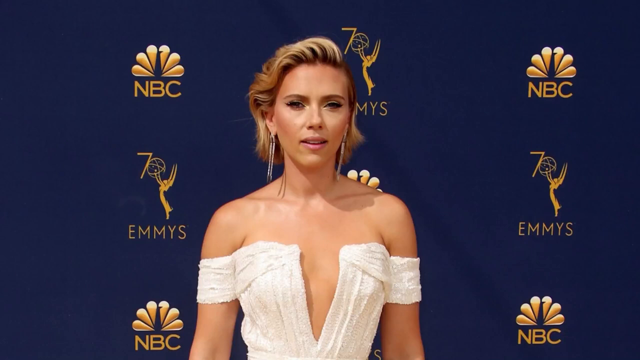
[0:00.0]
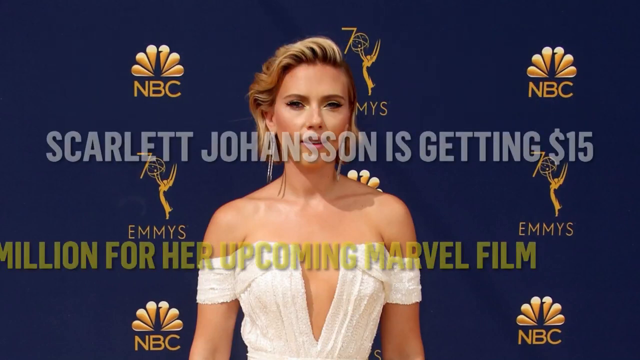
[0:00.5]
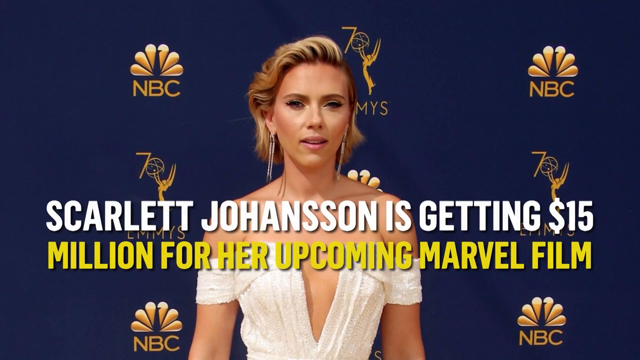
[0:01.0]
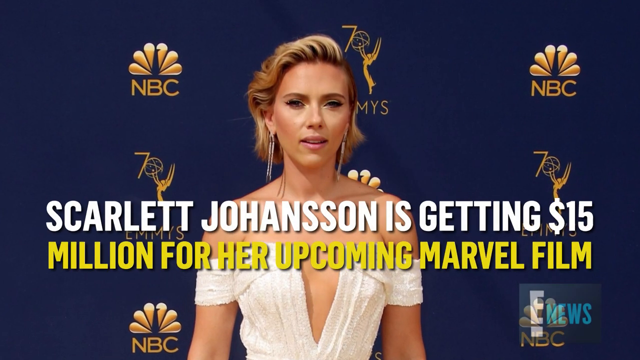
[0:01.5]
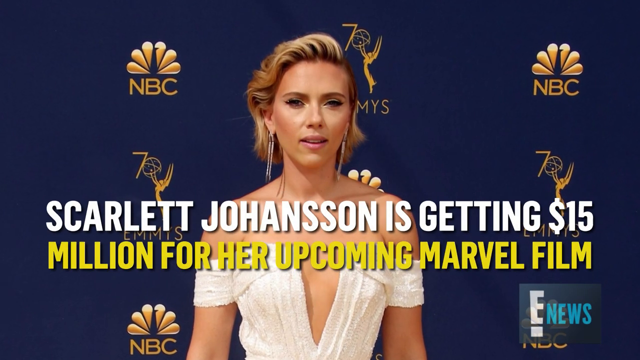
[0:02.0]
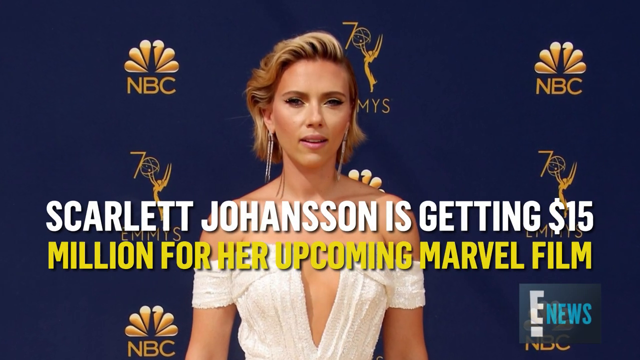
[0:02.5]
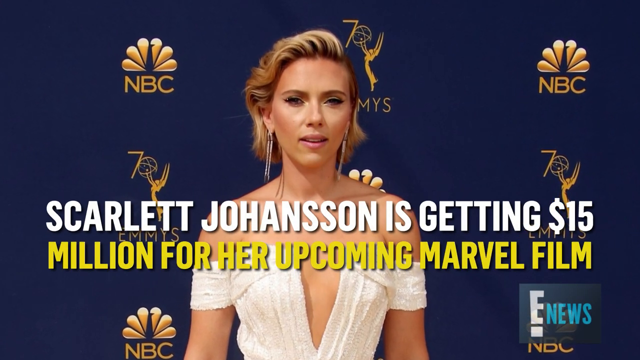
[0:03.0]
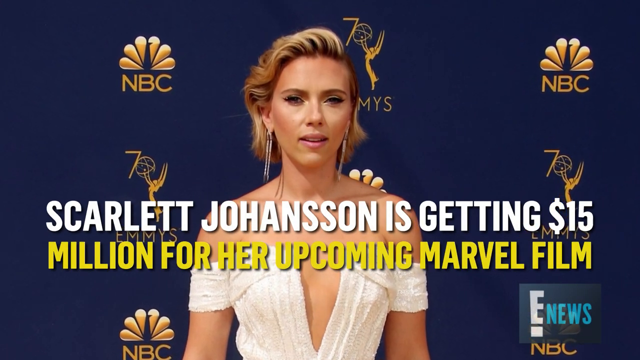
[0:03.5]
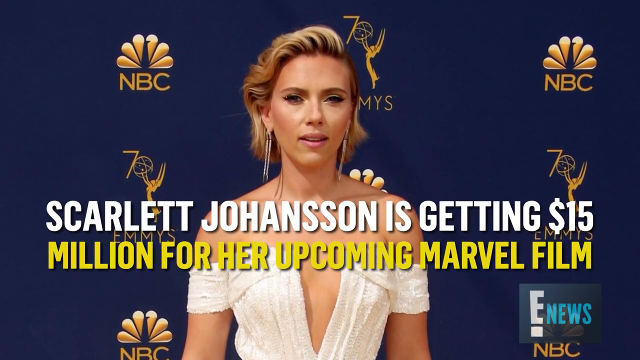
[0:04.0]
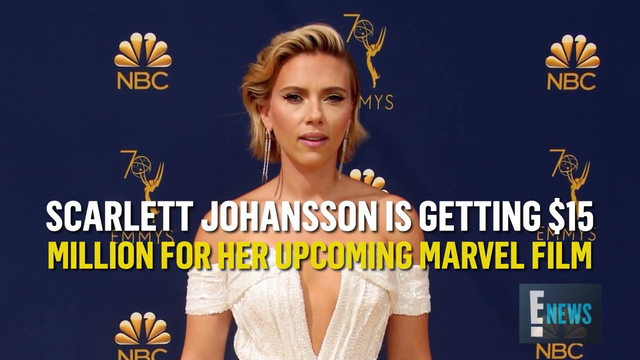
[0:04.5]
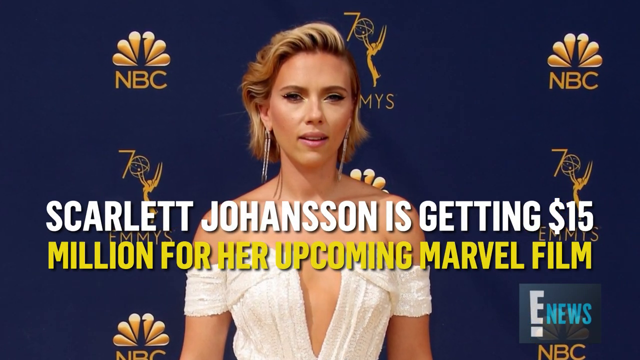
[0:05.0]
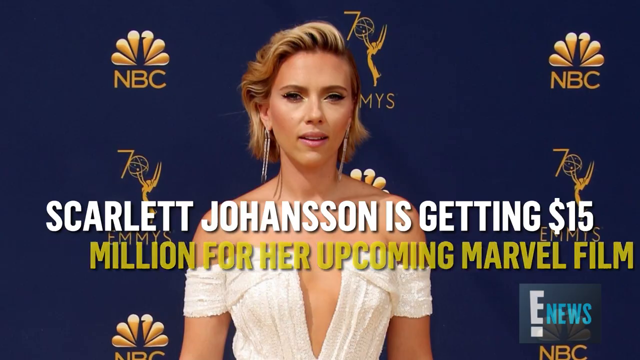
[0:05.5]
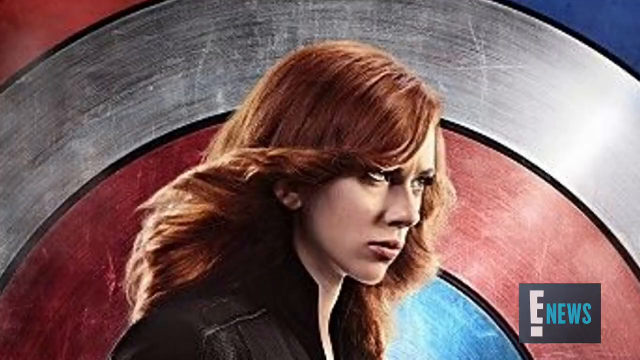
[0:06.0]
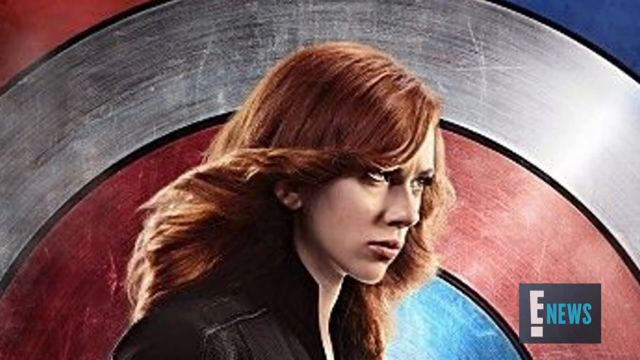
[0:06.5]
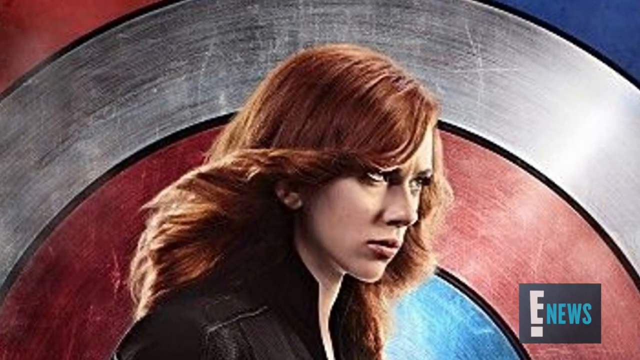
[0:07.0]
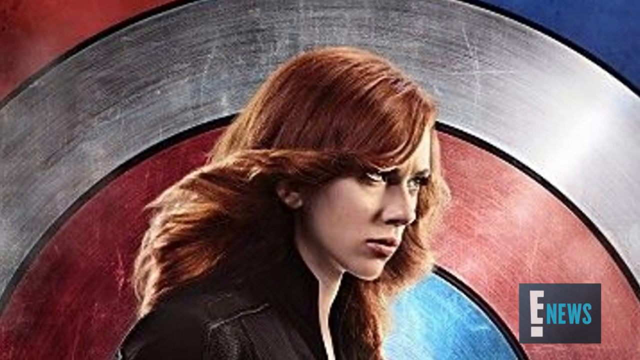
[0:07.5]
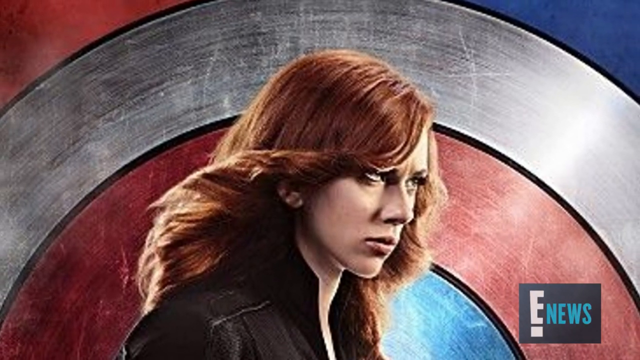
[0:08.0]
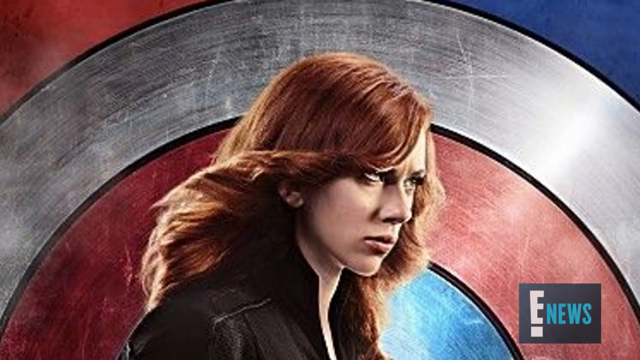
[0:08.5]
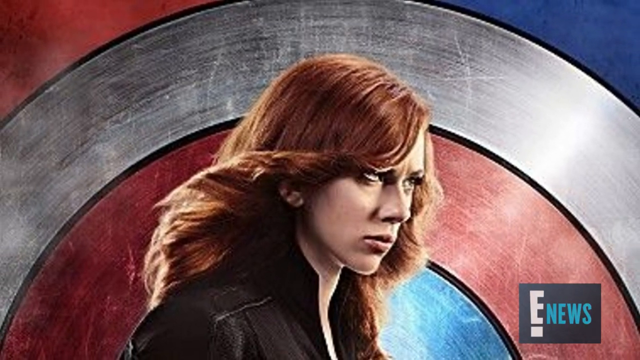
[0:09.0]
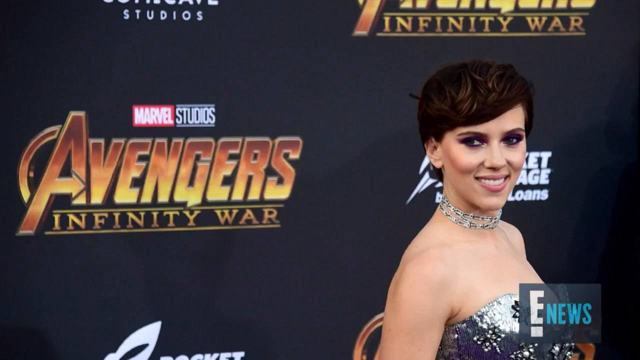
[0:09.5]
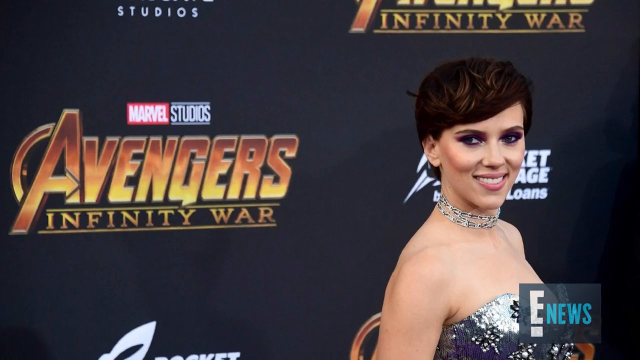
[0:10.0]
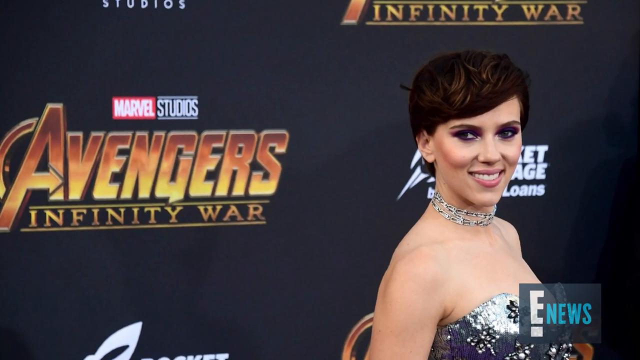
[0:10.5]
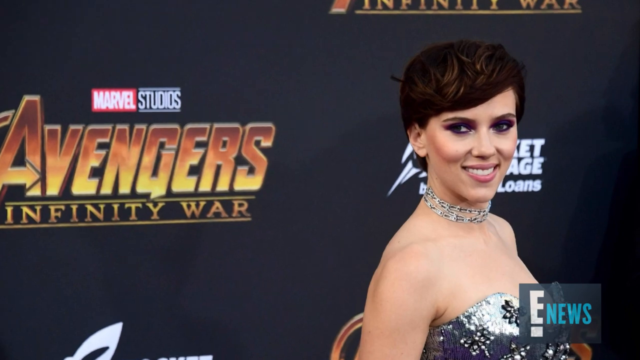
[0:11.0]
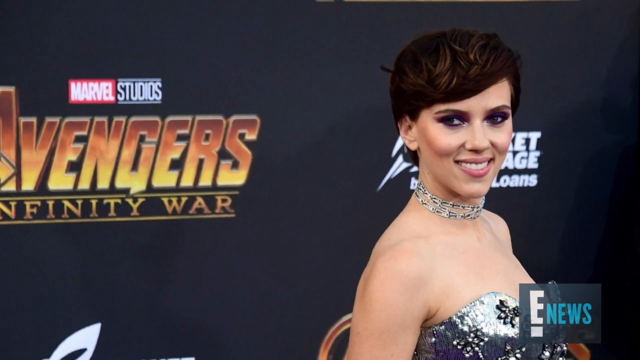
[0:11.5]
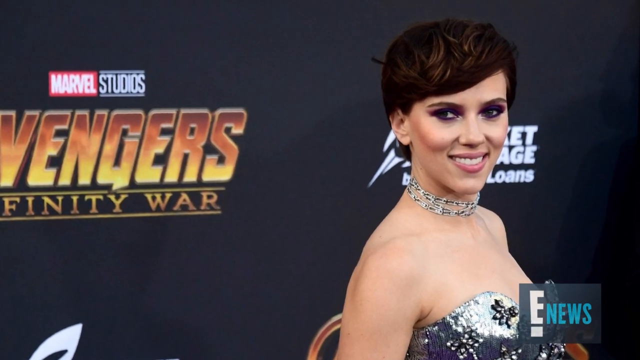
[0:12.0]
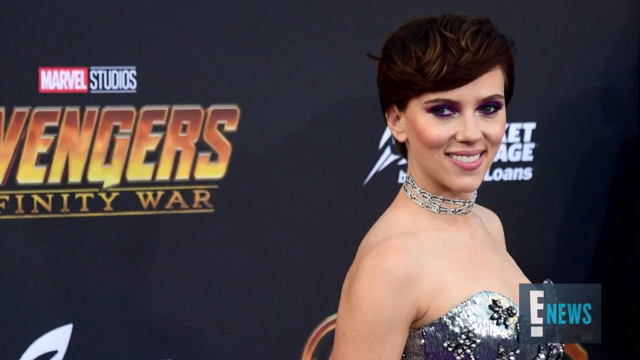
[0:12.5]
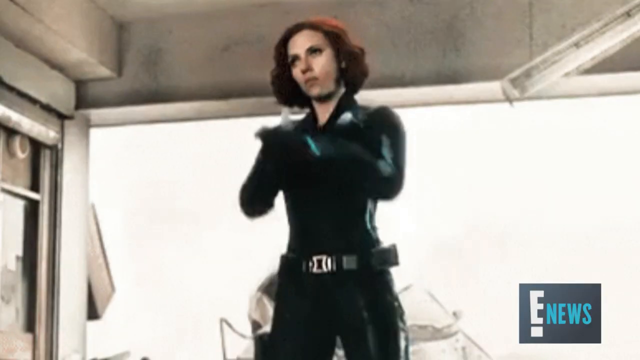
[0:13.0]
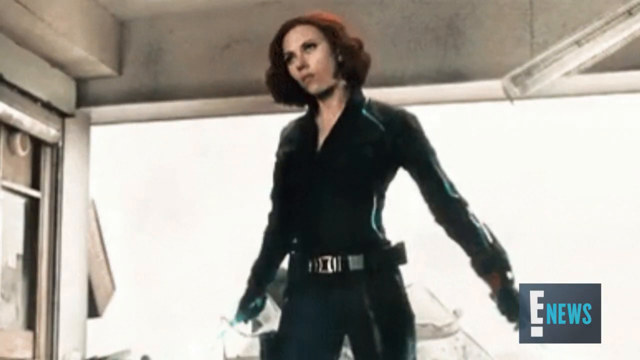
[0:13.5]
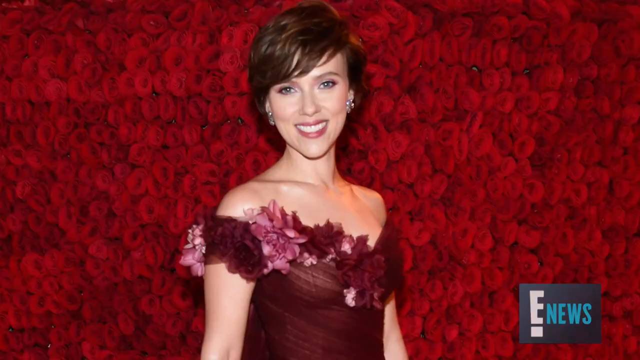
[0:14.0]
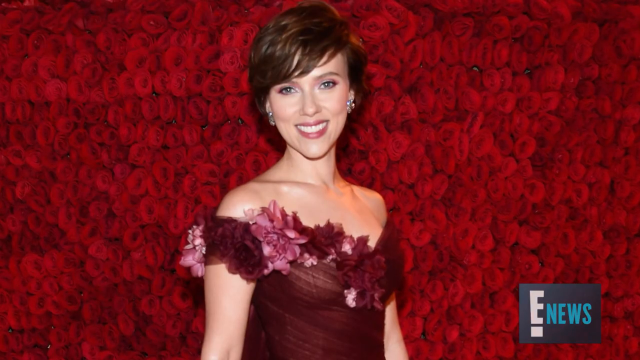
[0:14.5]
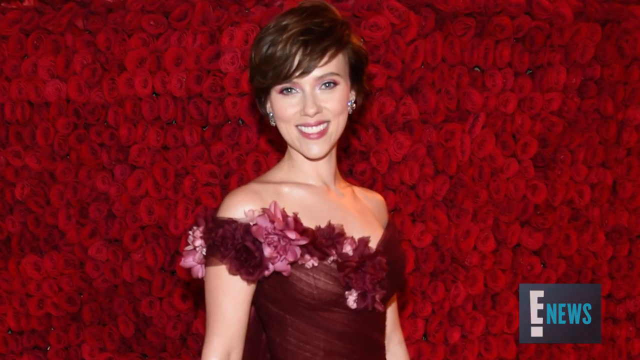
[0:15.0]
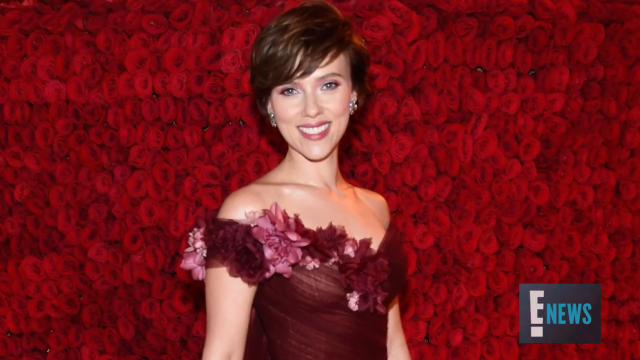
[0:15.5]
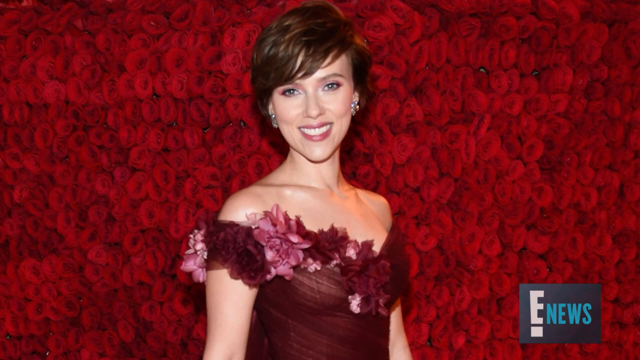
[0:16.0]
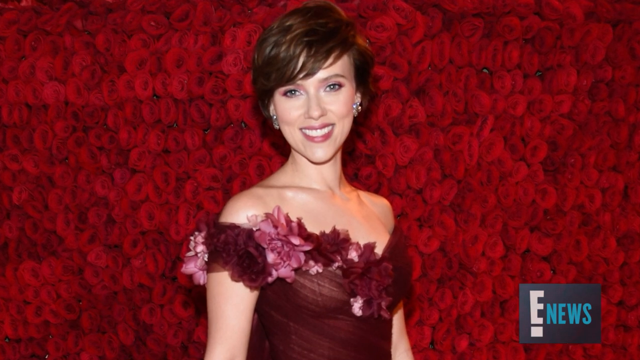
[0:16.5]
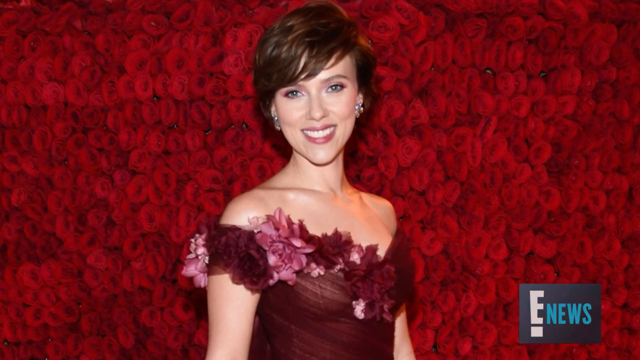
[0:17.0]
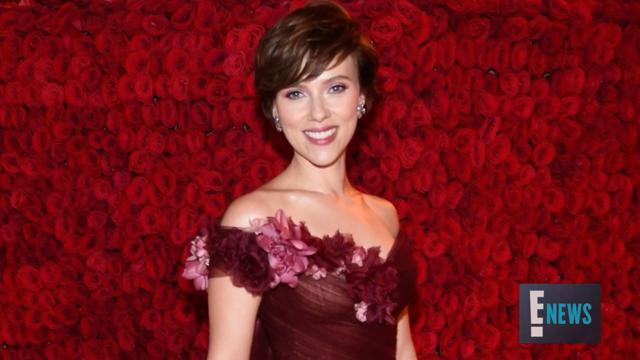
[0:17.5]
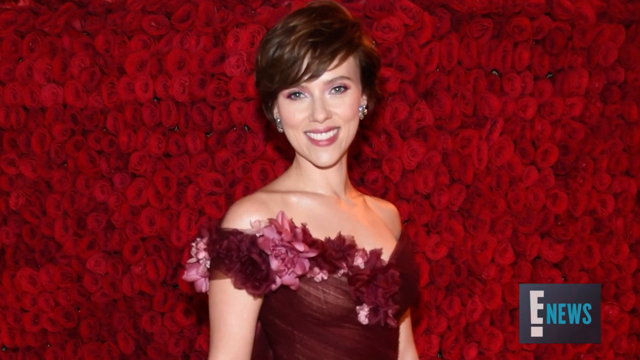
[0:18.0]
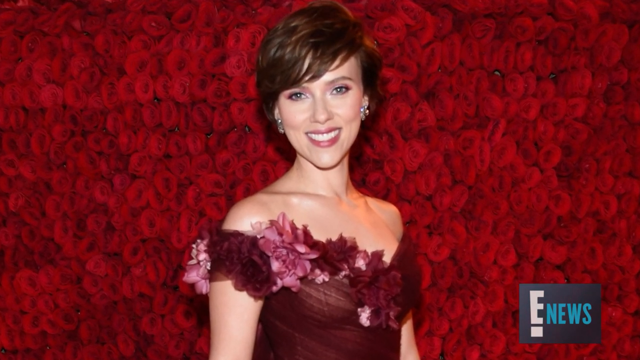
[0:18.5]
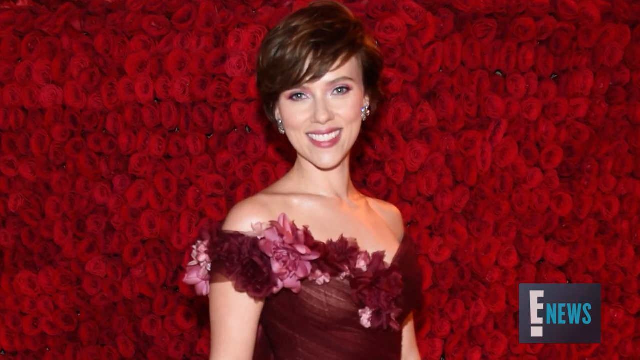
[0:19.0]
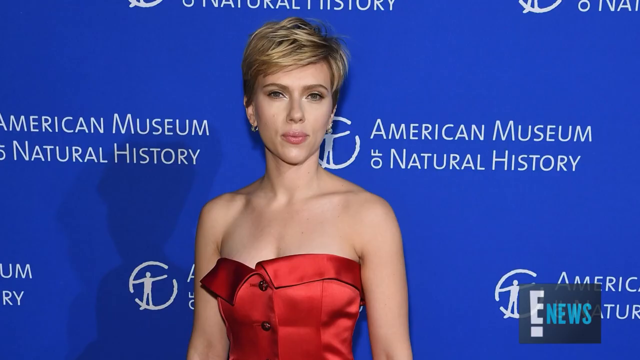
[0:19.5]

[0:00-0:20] The video opens with a picture of Scarlett Johansson facing the camera. The background is navy blue with different logos behind her: an NBC logo in gold and an Emmys logo, also in gold. The Emmys statue, or figurine, is held up and has "70" on it. Text then appears on the screen reading "Scarlett Johansson is getting $15 million for upcoming Marvel film". She wears a white dress, with her hair combed back and long earrings that touch her shoulders. The image changes to one with a Captain America-style shield behind her, showing her as her character Black Widow, with red hair, looking into the camera. Next comes a still shot of her with short black hair and her right shoulder facing the camera, with an Avengers Infinity War logo in the background and Marvel Studios at the top. This is followed by an action shot of her as Black Widow in an all-black outfit with a tactical tool belt. The final image shows her with auburn hair and a wide smile, facing the camera in front of a red flowery background, wearing a red dress with floral items on it.